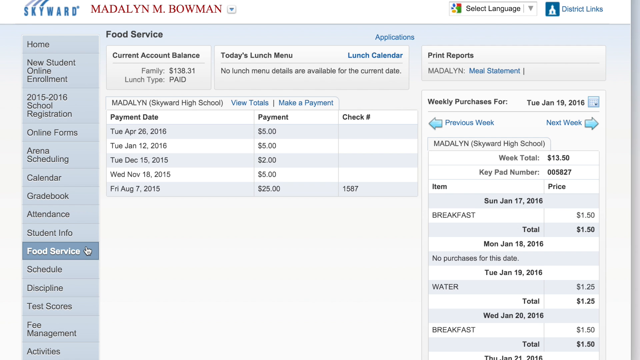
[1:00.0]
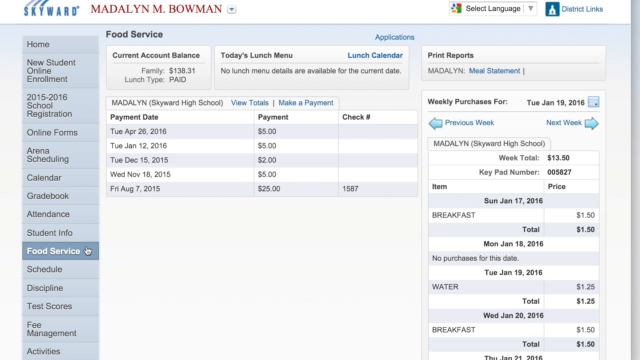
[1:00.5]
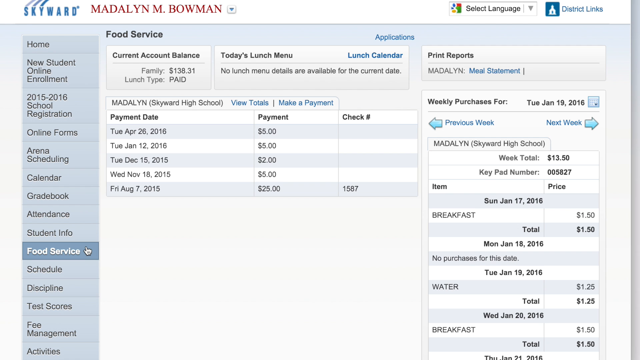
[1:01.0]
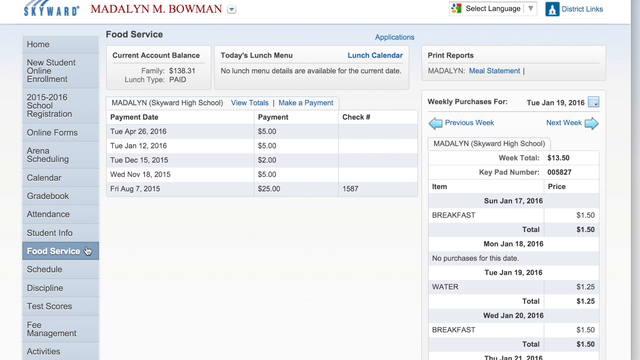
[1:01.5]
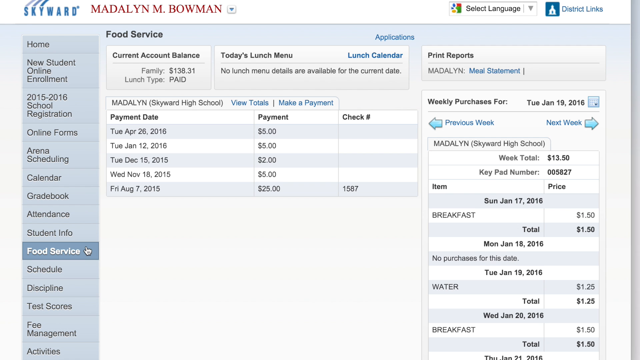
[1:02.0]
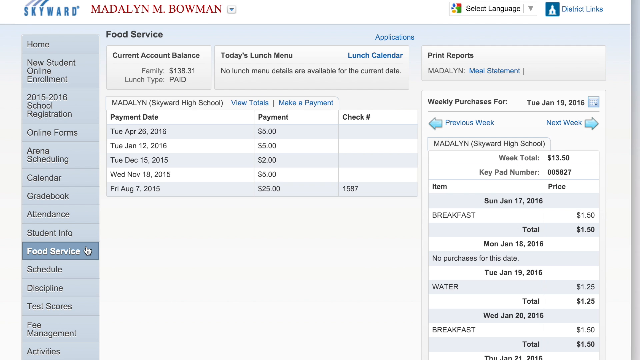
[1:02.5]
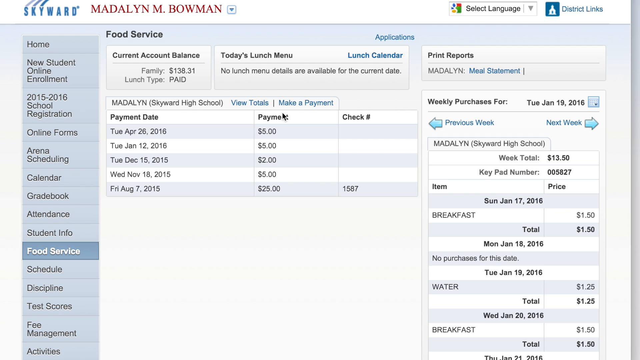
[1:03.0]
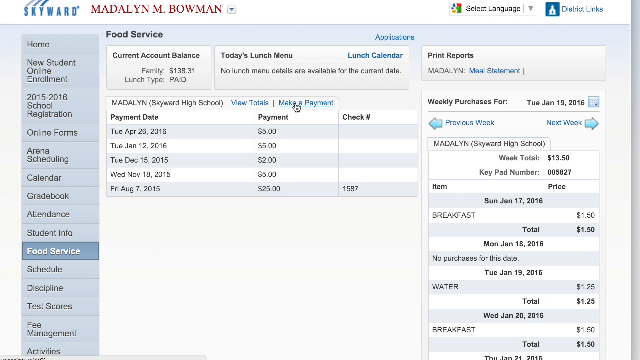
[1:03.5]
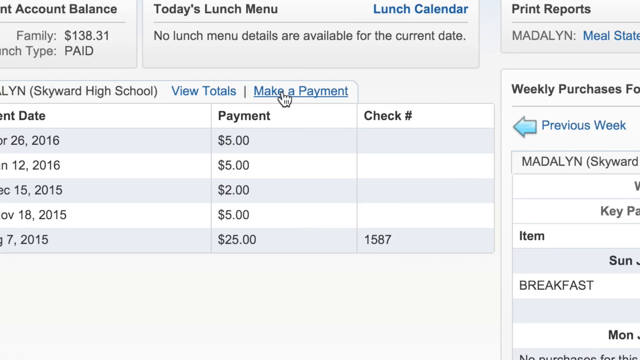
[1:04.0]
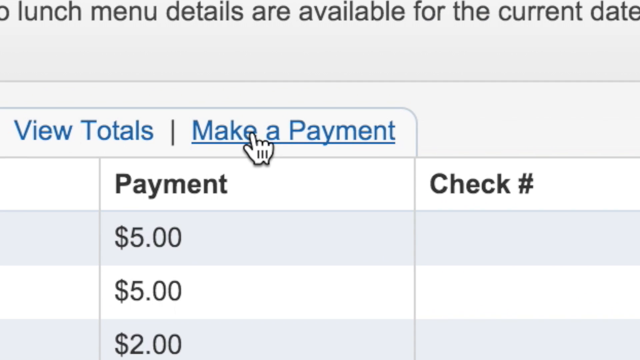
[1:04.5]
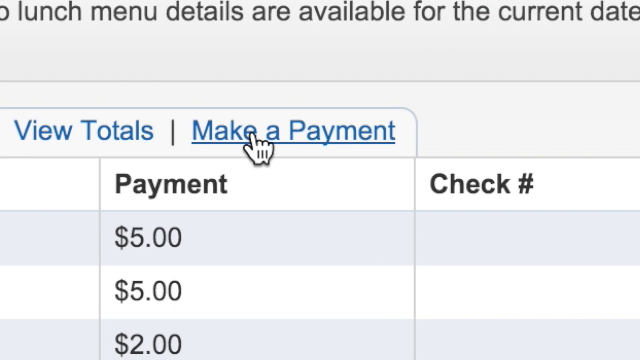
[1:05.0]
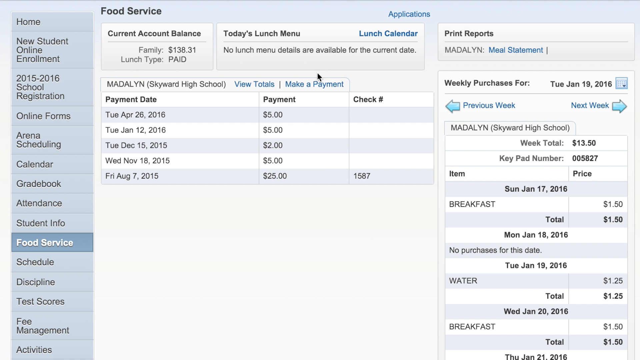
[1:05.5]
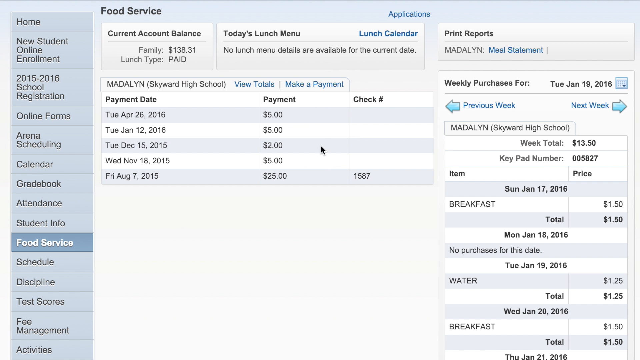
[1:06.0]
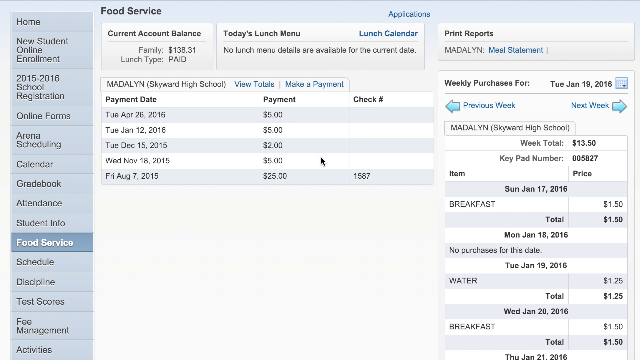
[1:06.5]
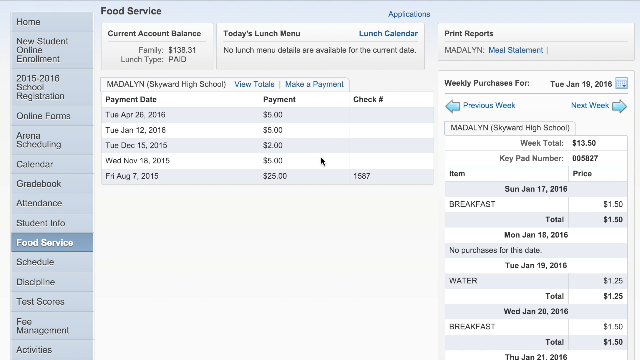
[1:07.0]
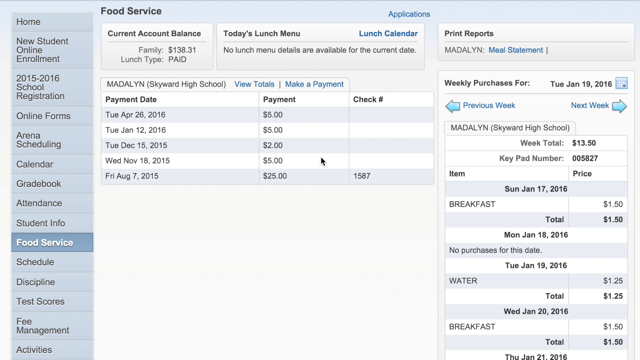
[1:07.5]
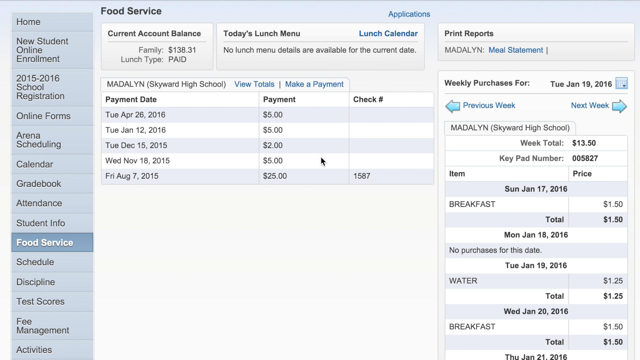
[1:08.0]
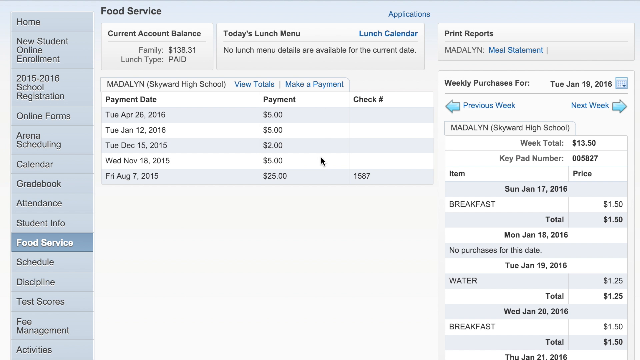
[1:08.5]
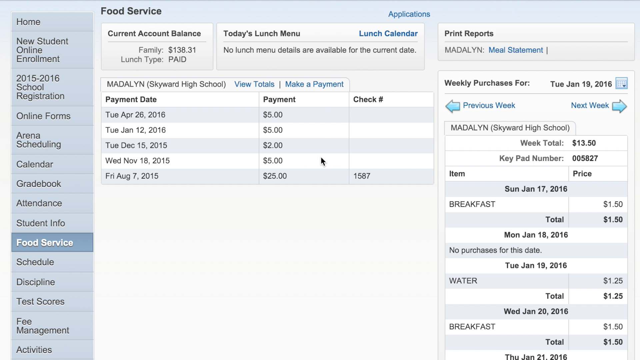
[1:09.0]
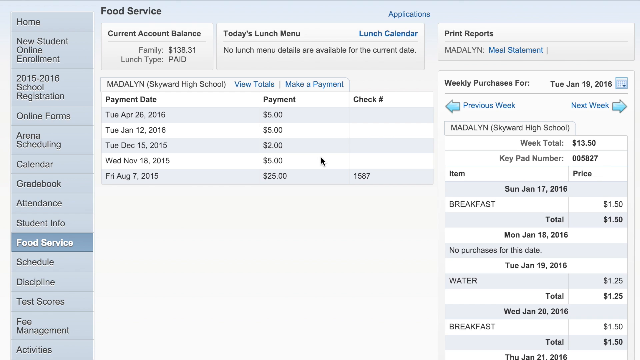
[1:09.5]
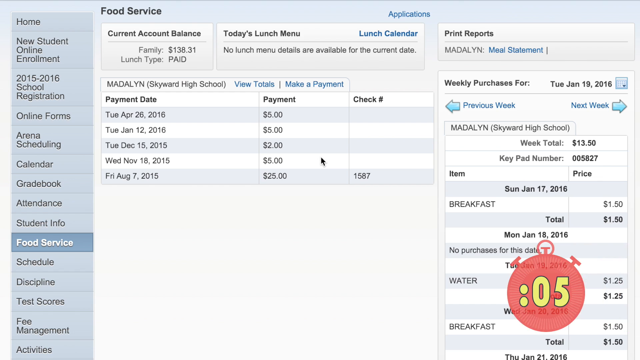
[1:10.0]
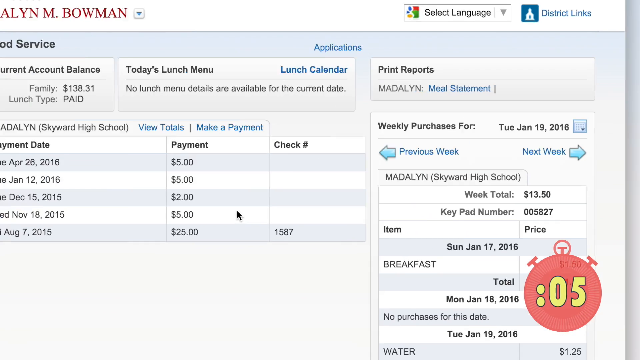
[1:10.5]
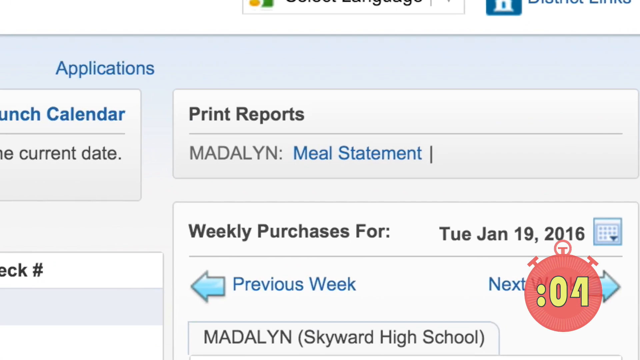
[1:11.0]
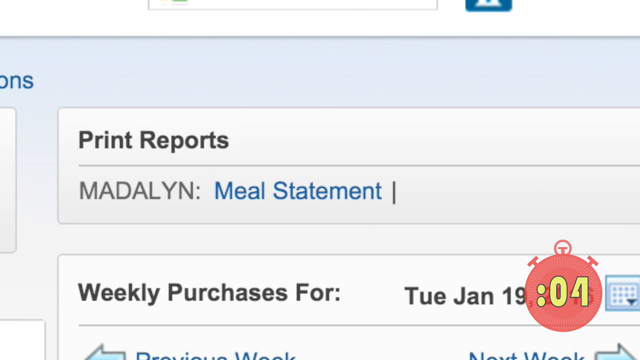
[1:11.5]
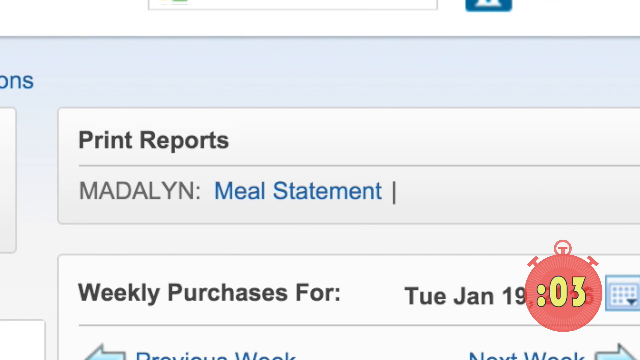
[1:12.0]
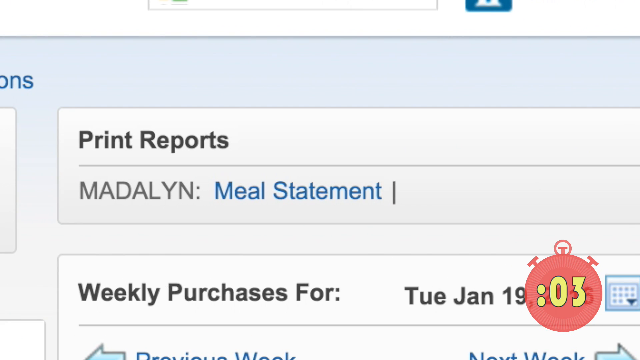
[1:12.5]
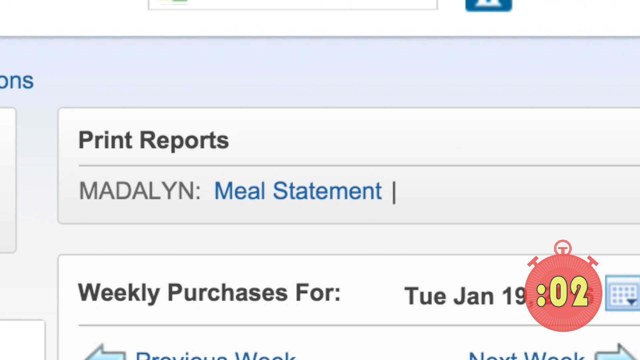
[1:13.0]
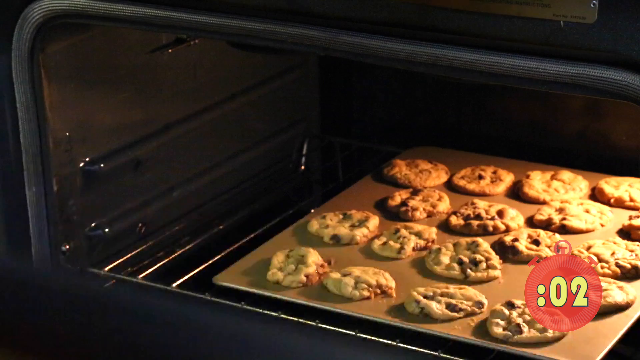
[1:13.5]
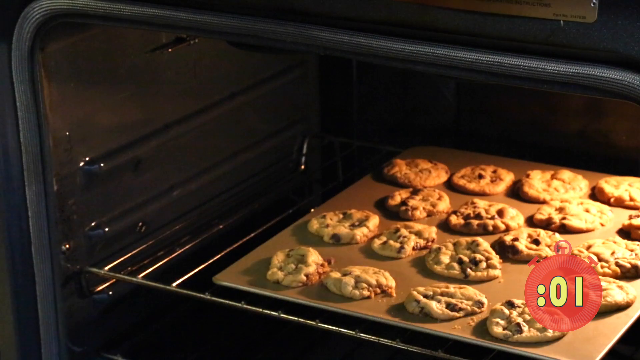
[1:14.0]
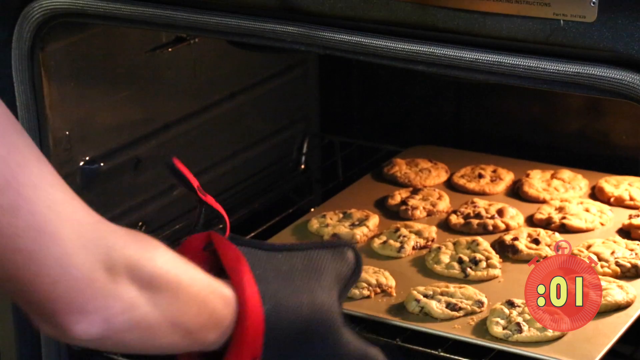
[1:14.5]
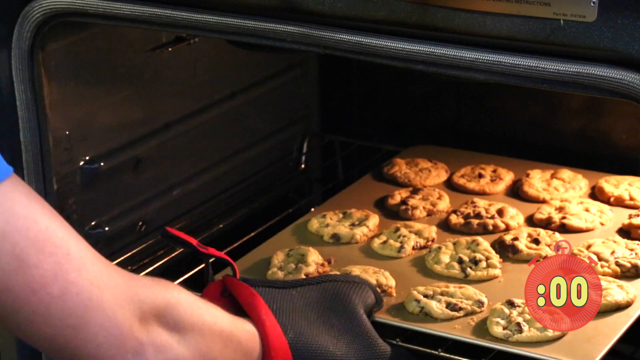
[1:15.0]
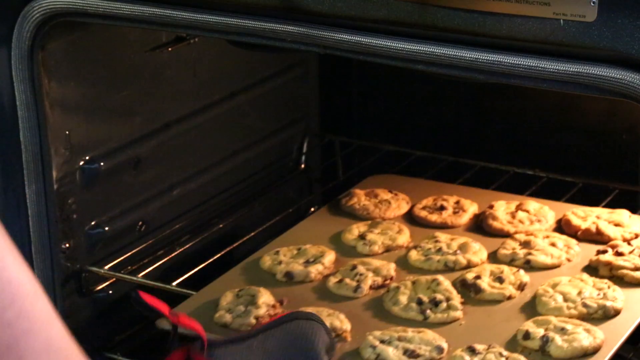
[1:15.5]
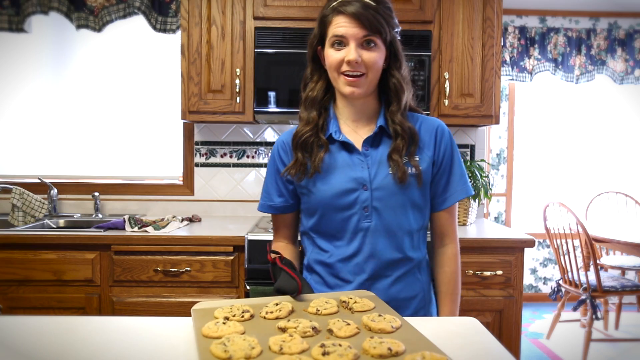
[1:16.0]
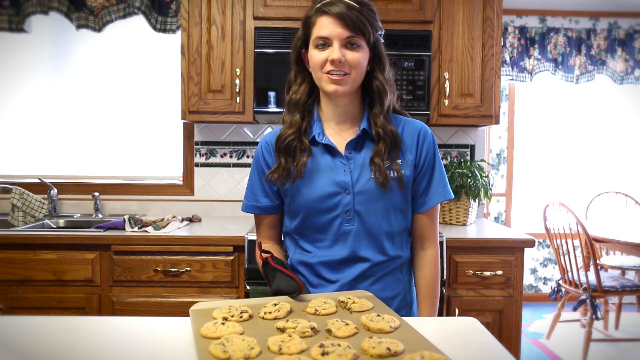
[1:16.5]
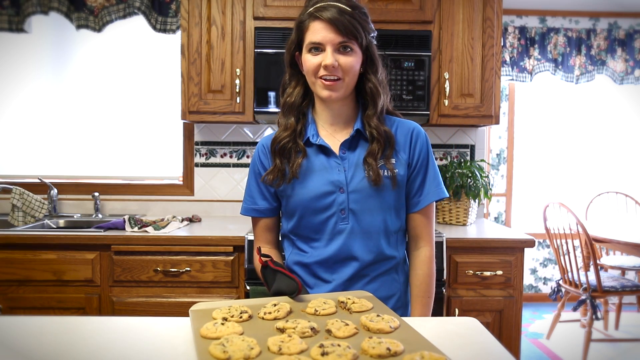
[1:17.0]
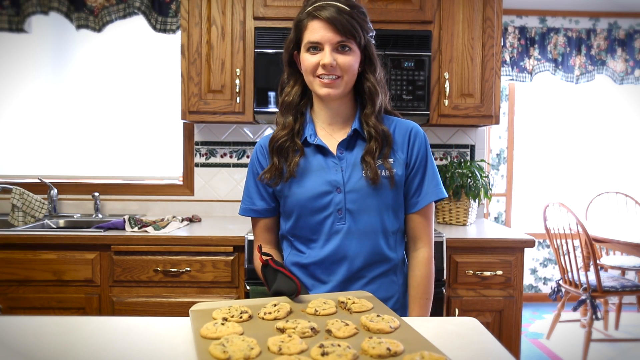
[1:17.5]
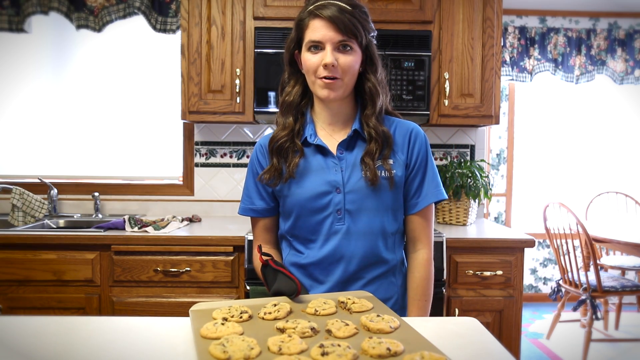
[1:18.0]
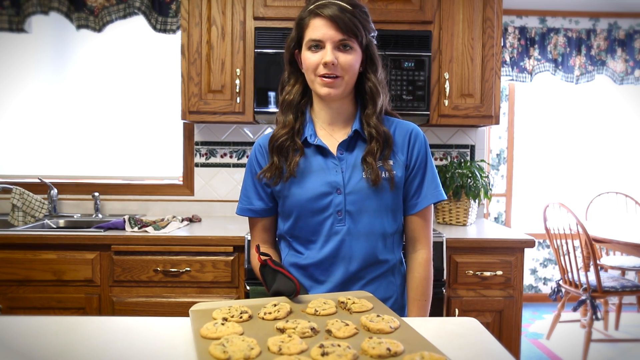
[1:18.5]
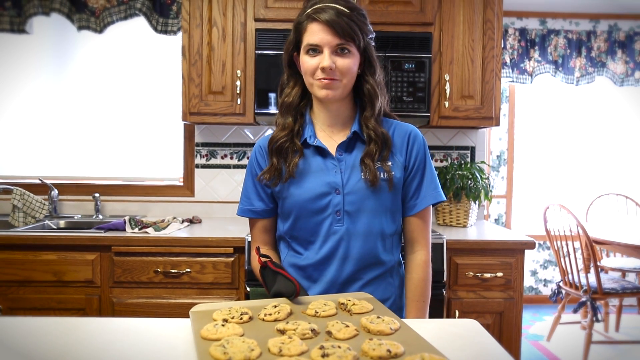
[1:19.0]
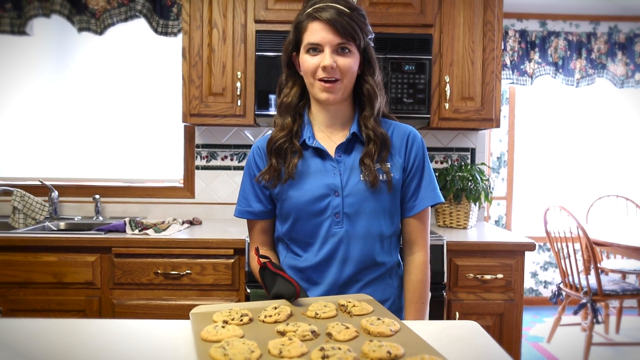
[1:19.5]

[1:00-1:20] The food service account for Madeline Bowman at Skyward High School is shown, with the balances, the current lunch calendar, weekly purchases, and an option to print receipts. The steps of making a payment are shown, with the name and with view totals and make a payment in the middle. The video then transitions to a woman in a country kitchen, with a stove, a sink, and a microwave behind her. In front of her is an island where she is preparing cookies. She wears a blue polo shirt and has long brown hair swooped to the side. She pulls cookies out of an oven while still talking, and then holds a pan of the cookies while talking.